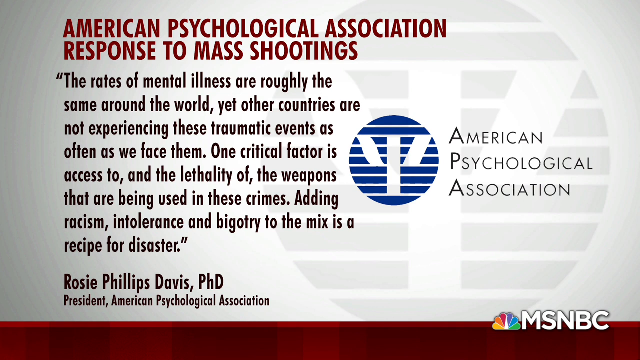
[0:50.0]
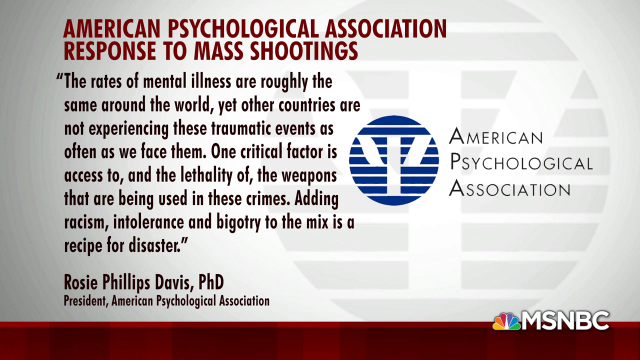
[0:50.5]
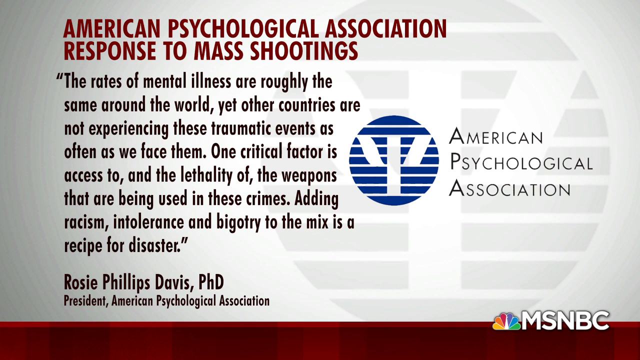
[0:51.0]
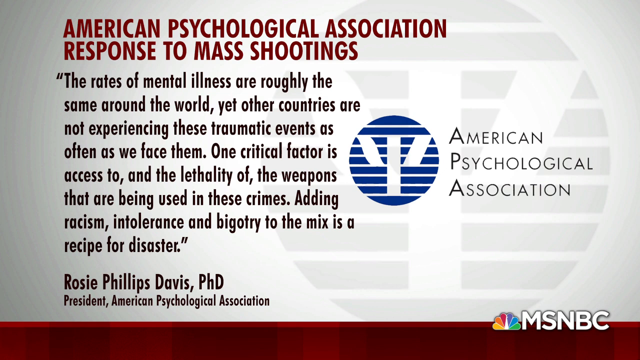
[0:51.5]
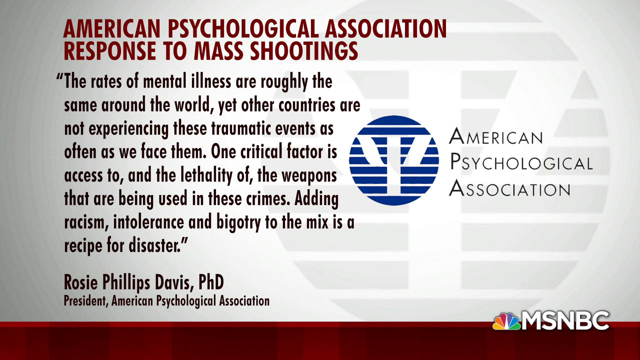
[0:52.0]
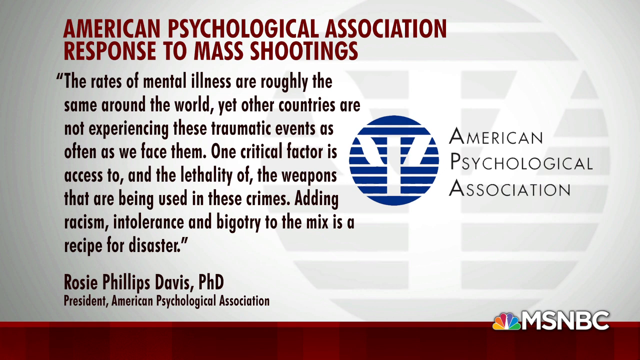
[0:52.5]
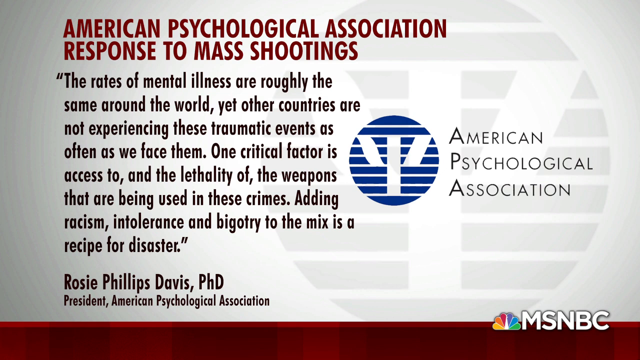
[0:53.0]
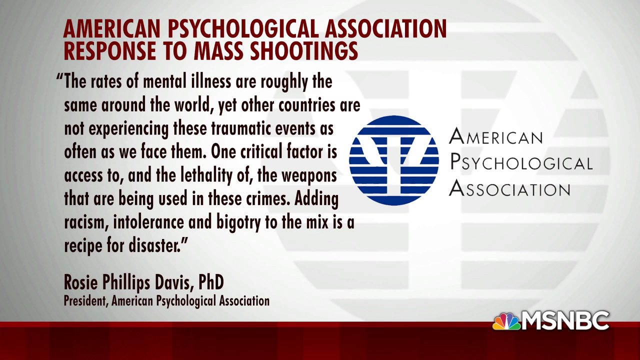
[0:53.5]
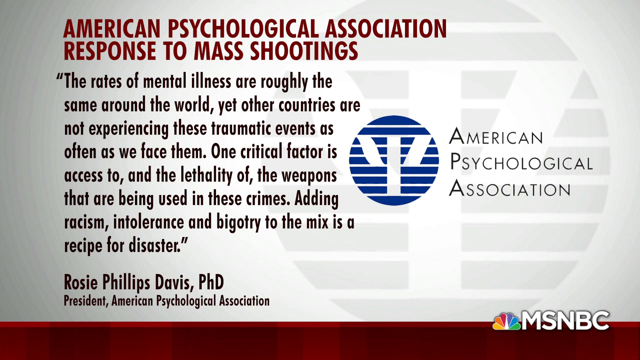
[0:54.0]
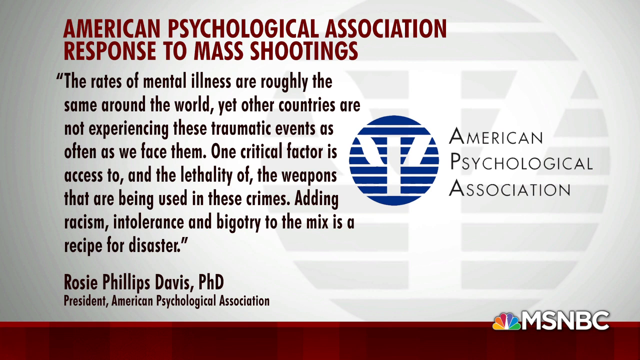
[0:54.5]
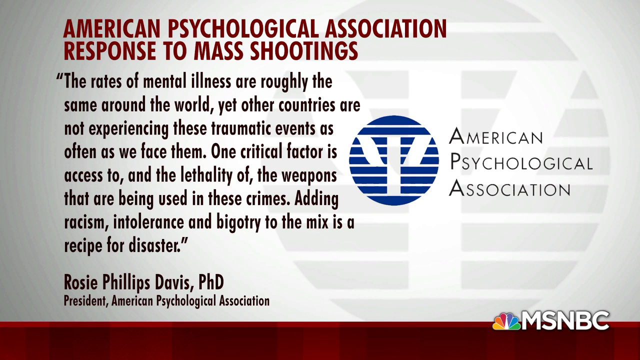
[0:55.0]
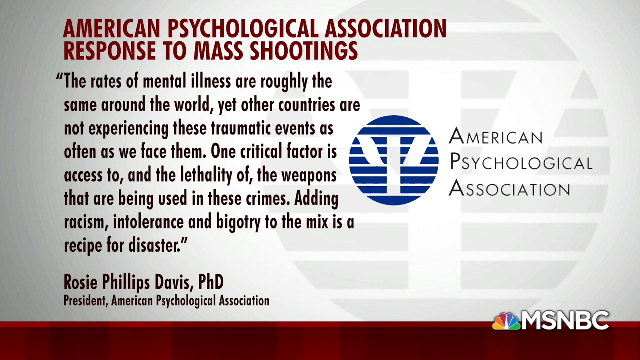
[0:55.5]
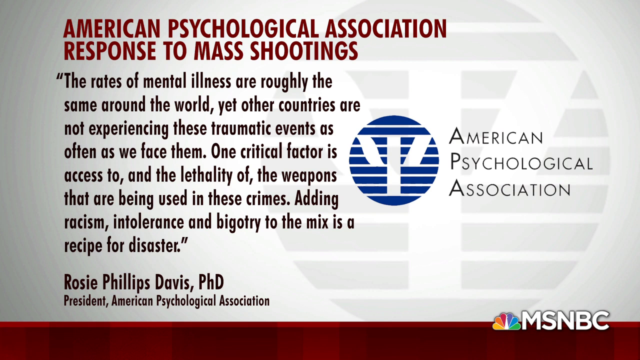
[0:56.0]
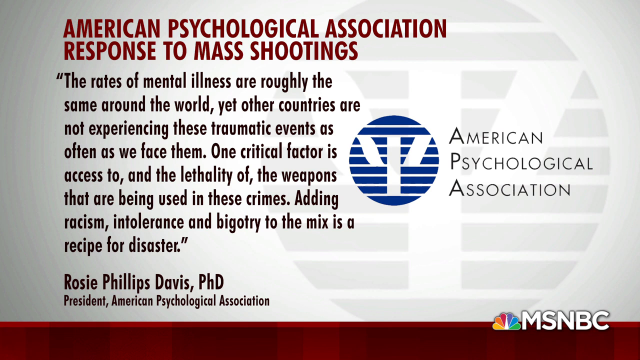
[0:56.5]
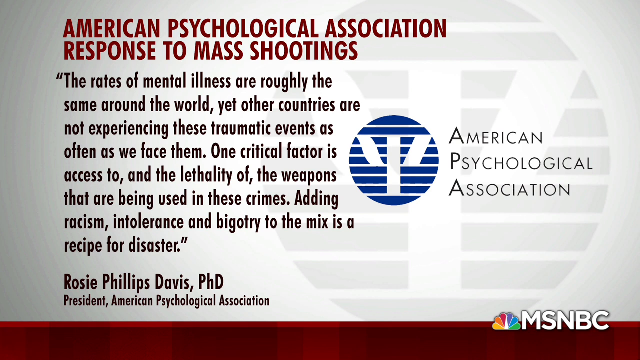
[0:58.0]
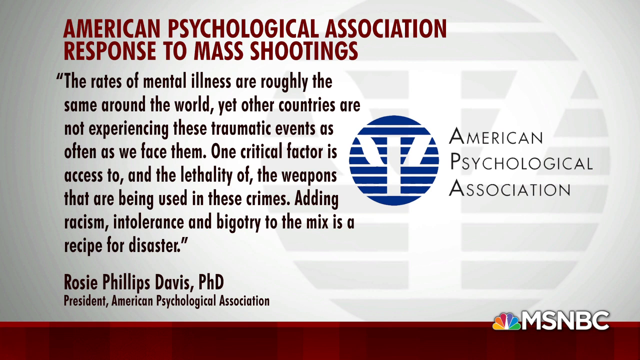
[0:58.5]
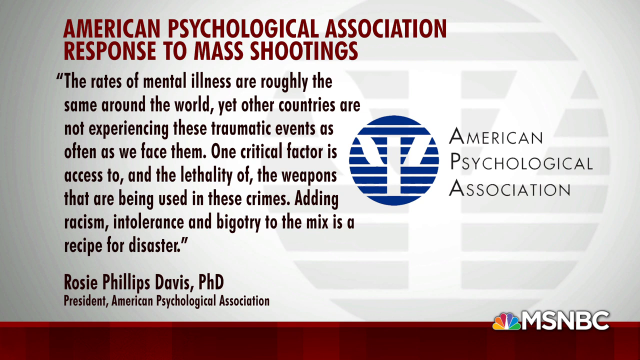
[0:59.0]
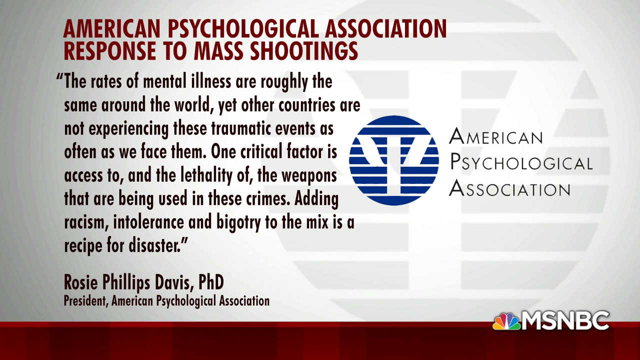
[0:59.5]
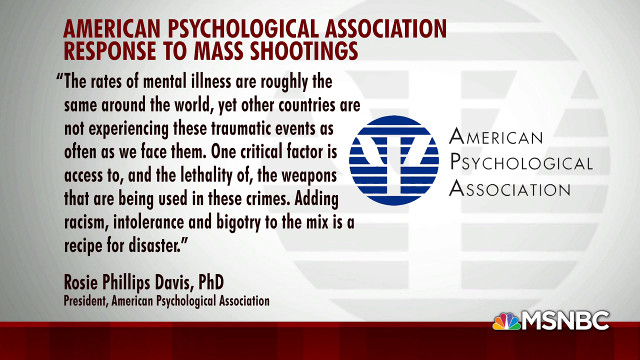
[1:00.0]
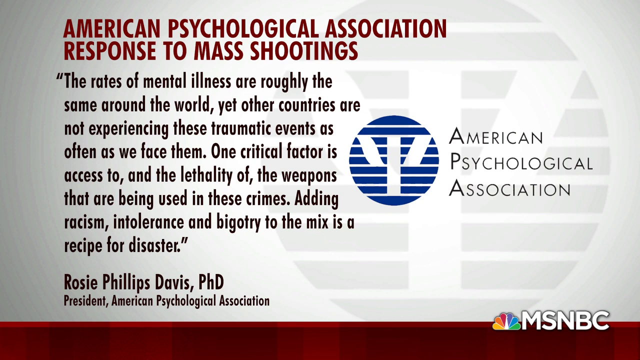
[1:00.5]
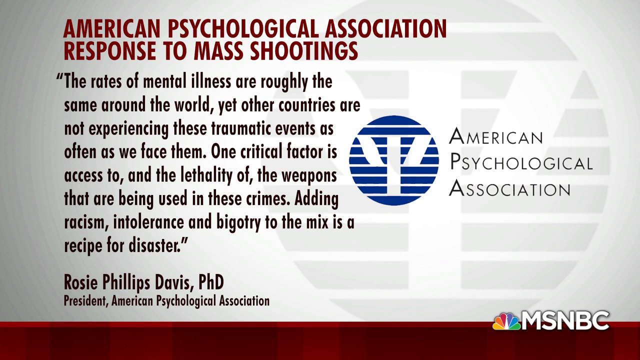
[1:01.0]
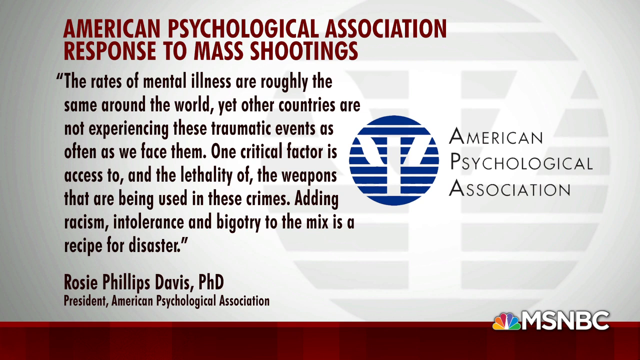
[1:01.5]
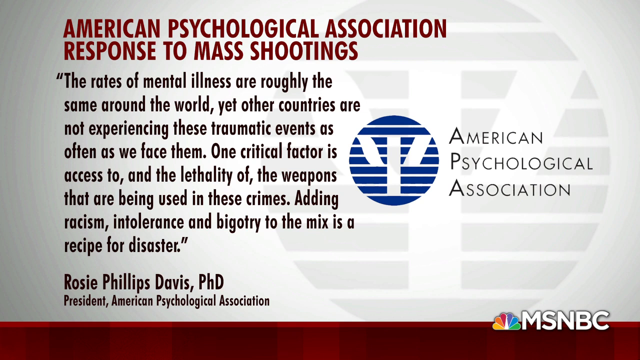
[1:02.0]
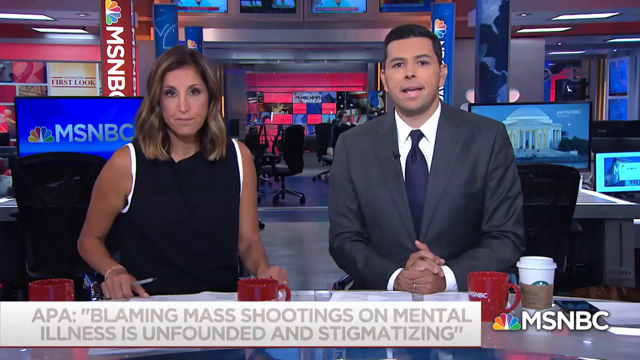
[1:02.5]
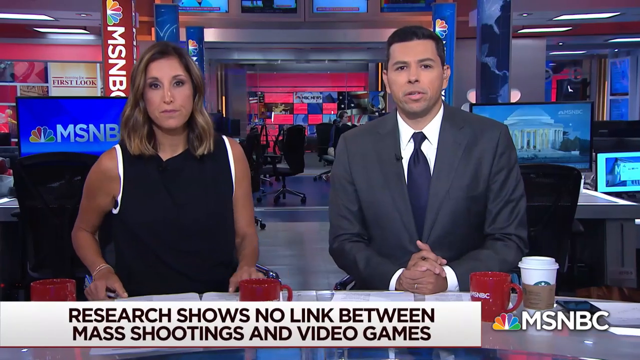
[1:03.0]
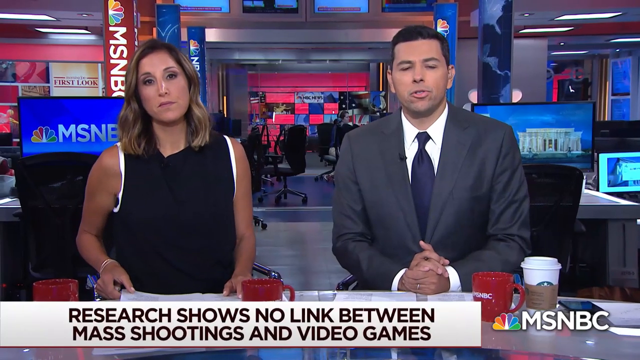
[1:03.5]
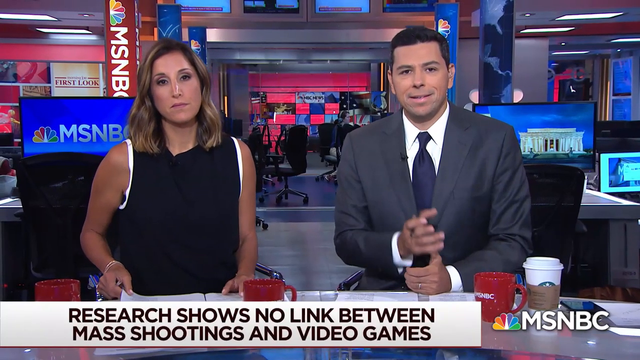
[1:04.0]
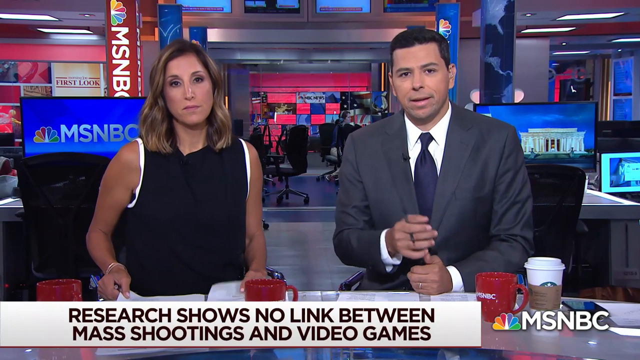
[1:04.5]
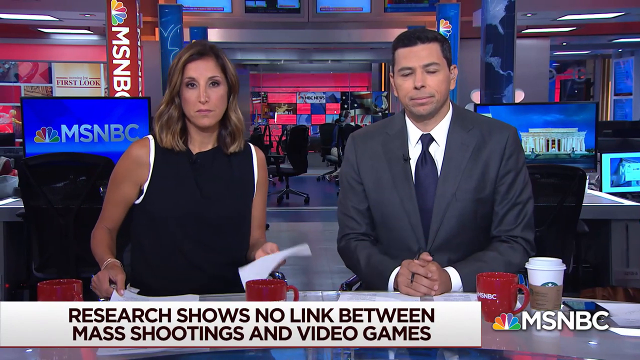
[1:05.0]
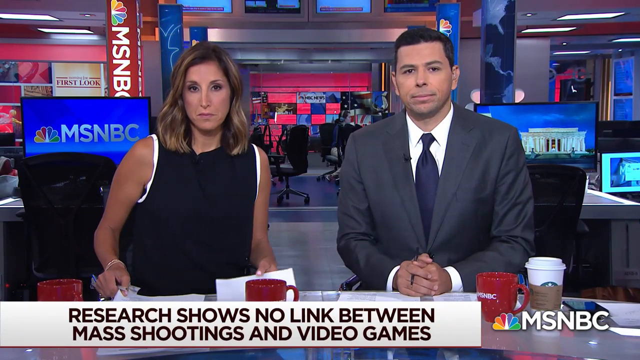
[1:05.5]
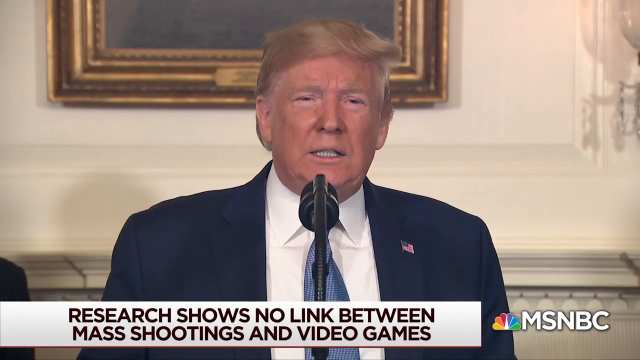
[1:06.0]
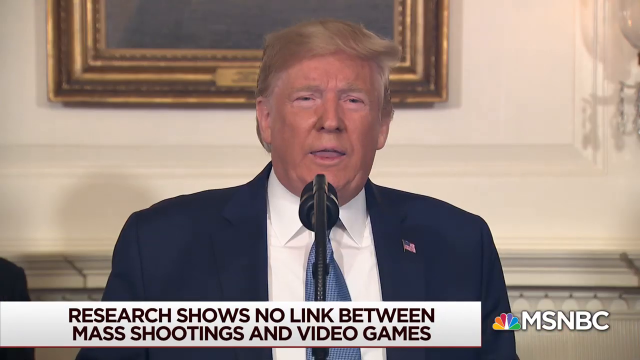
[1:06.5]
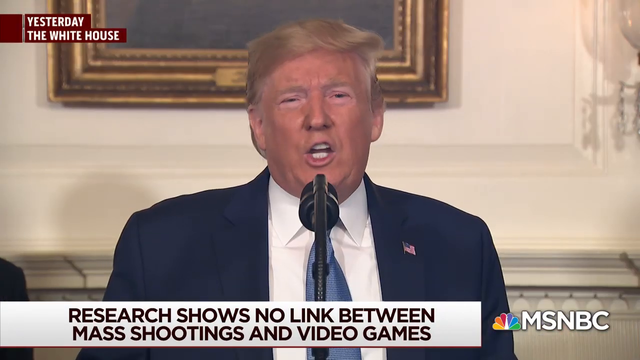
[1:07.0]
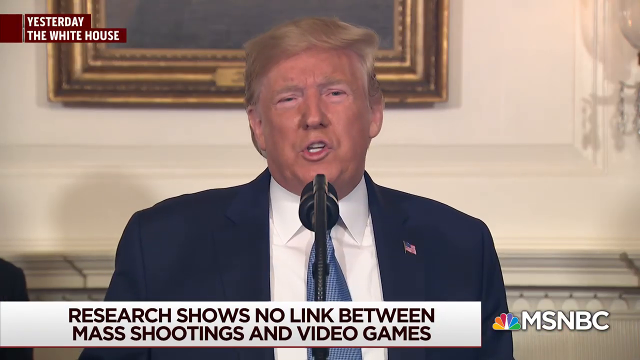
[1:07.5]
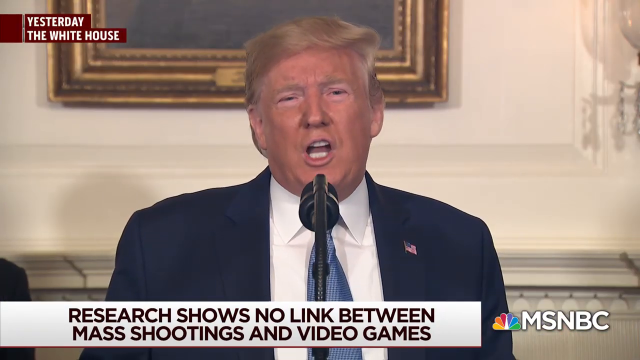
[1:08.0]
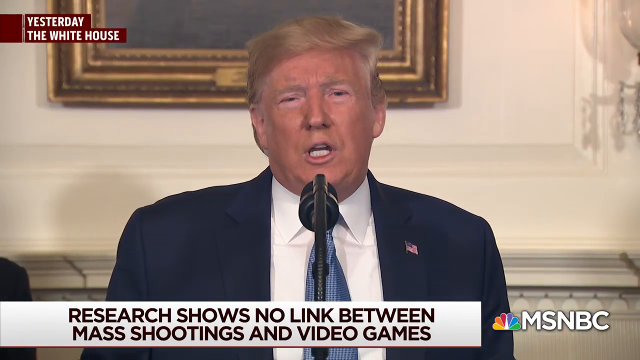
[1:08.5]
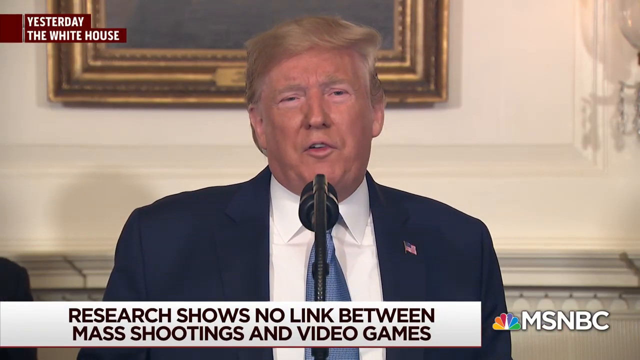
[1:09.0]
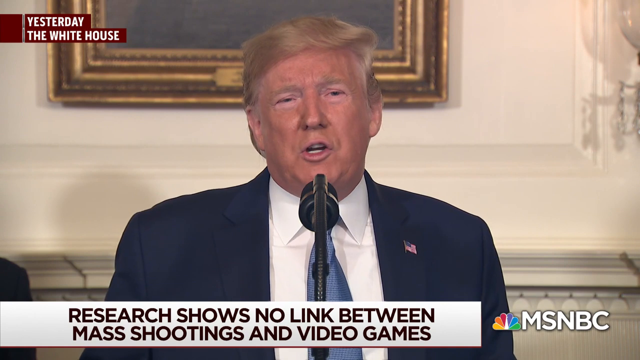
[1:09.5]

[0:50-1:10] The American Psychological Association response to mass shootings appears, attributed to Royce Phillips Davis, PhD, President, American Psychological Association, with the text "research shows no link between mass shootings and video games." Donald Trump is shown continuously talking to the press.